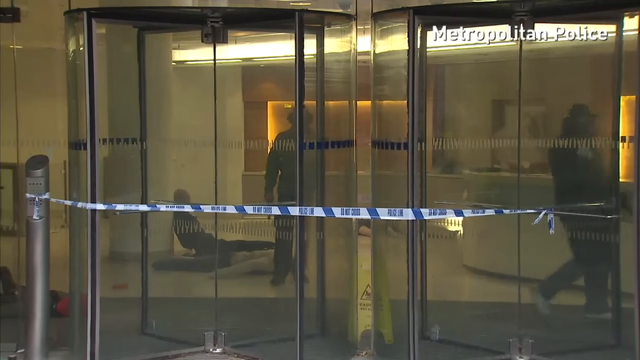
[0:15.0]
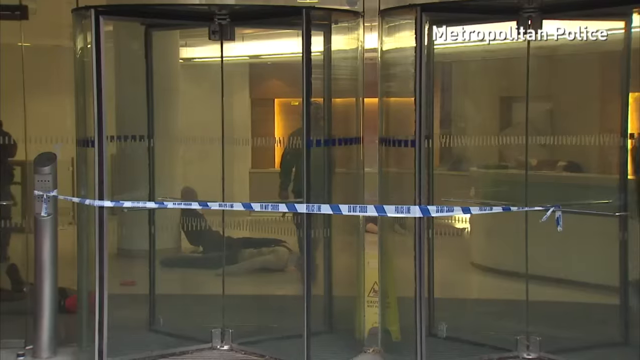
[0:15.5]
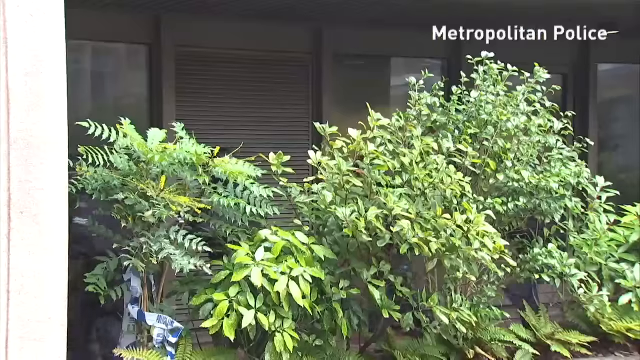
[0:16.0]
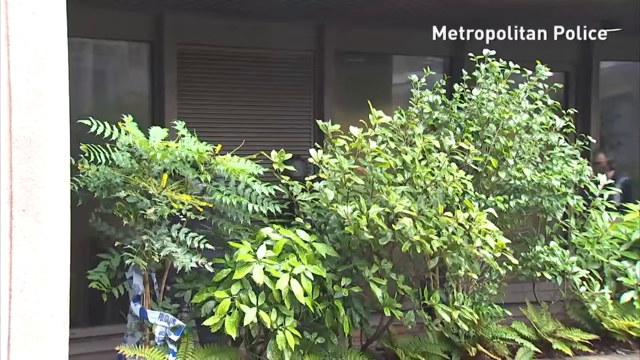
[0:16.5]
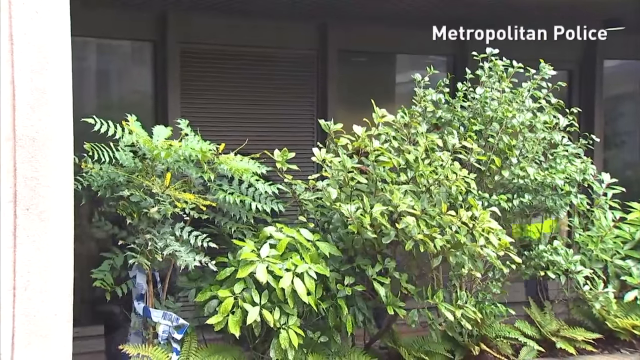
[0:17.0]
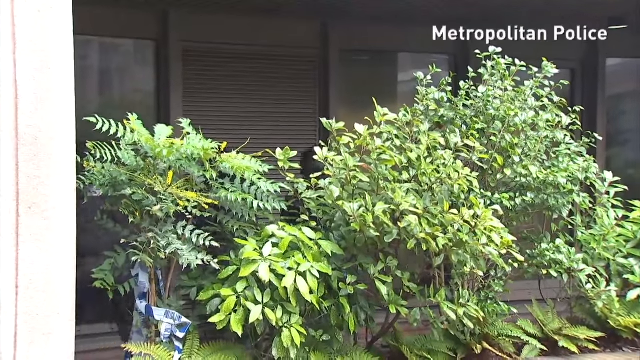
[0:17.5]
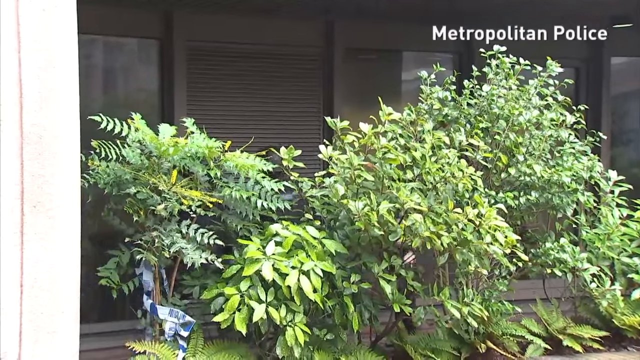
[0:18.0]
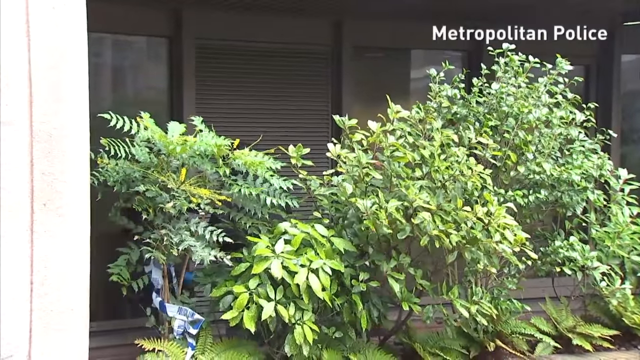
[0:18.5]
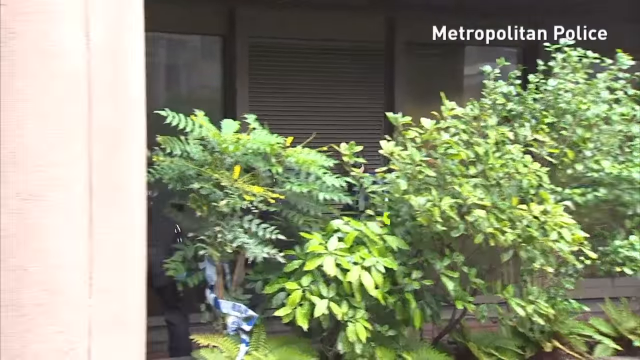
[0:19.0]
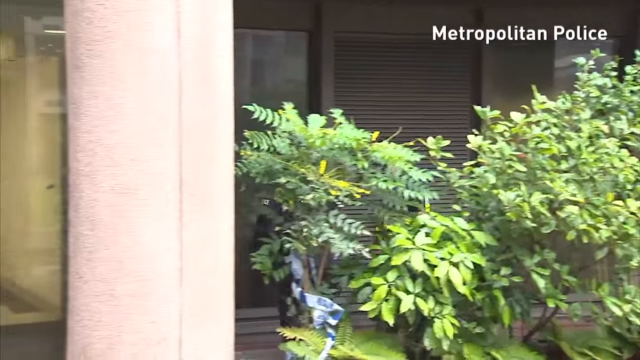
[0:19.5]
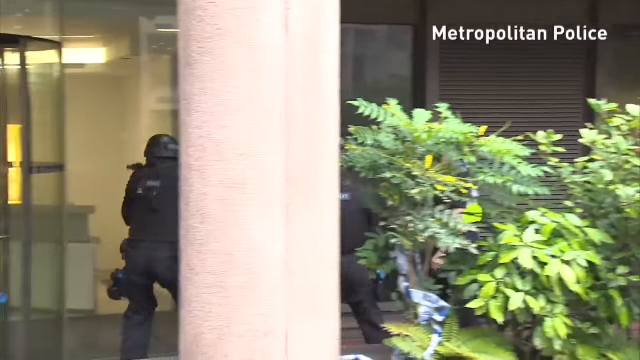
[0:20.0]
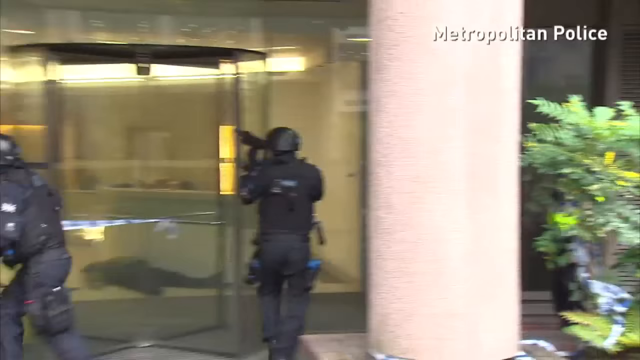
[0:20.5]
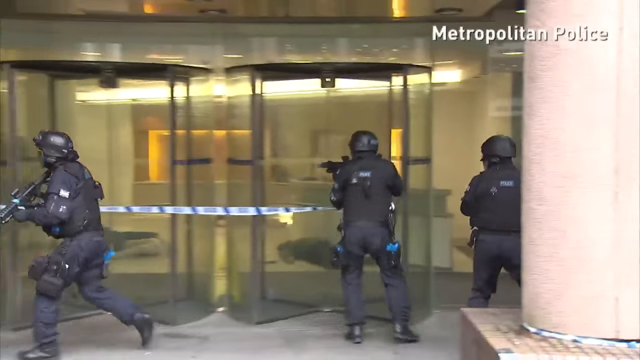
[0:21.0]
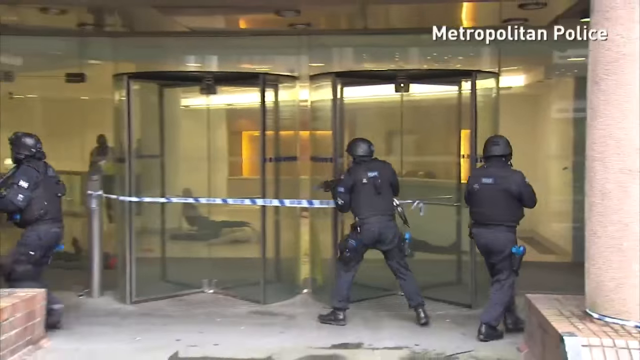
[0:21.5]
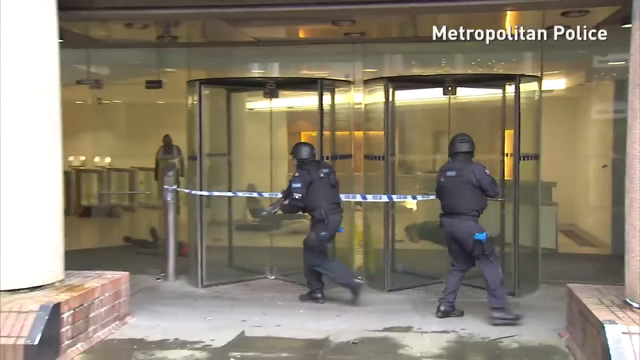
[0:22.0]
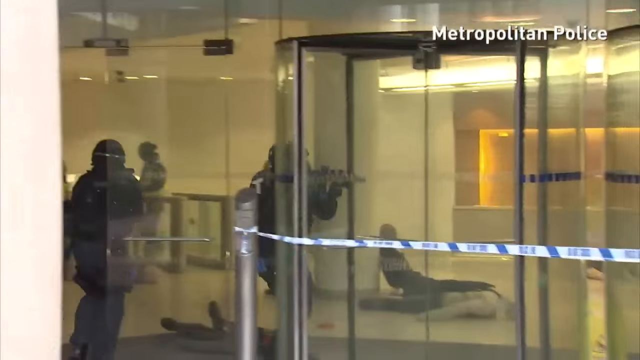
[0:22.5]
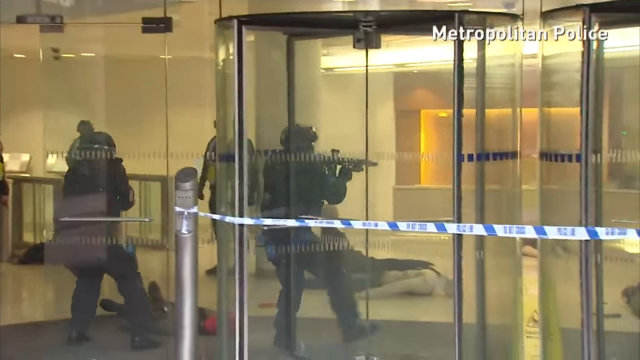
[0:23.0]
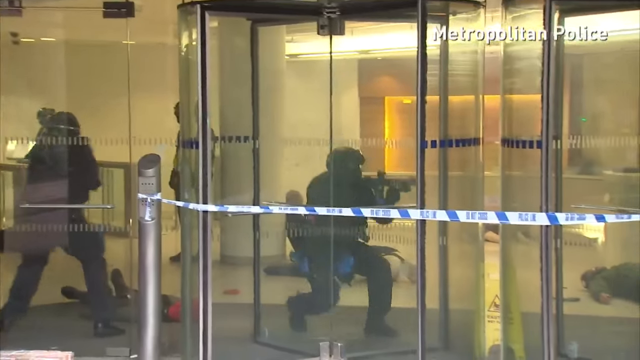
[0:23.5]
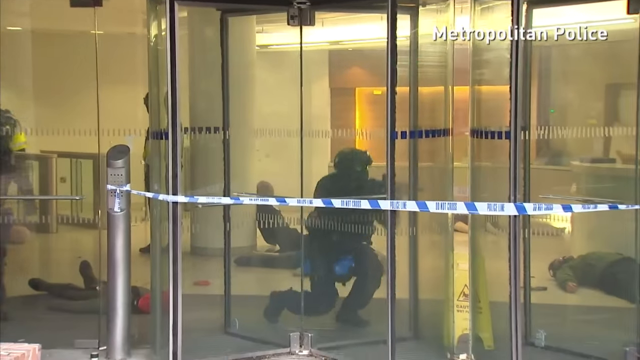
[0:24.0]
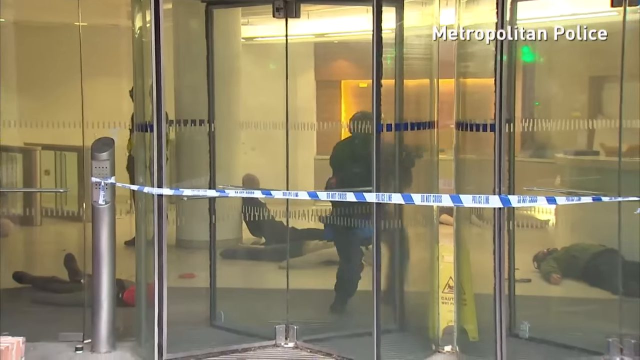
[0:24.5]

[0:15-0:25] A man enters the building, in what seems to be some type of training. Policemen with guns appear, kind of following the men and trying to attack them. A green light is visible, suggesting that although the scene looks real, it is a fake demo or possibly a police training exercise. People appear to be lying on the floor, apparently three or four people, possibly killed by the shooters, in what seems to be a skit or training.